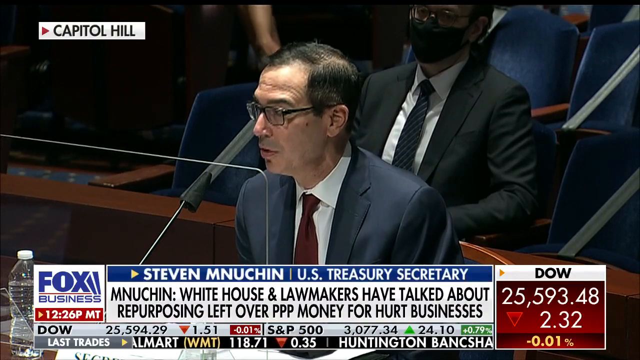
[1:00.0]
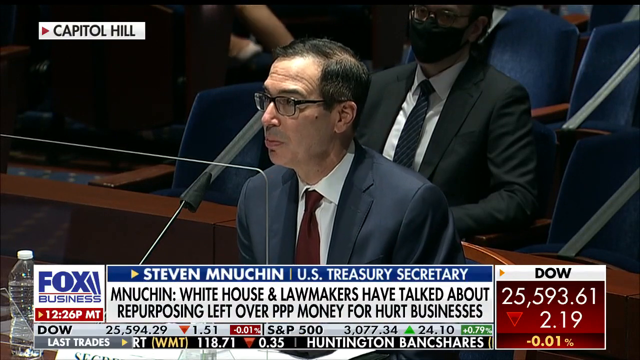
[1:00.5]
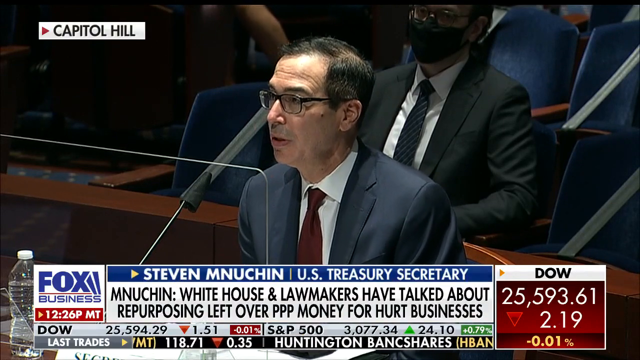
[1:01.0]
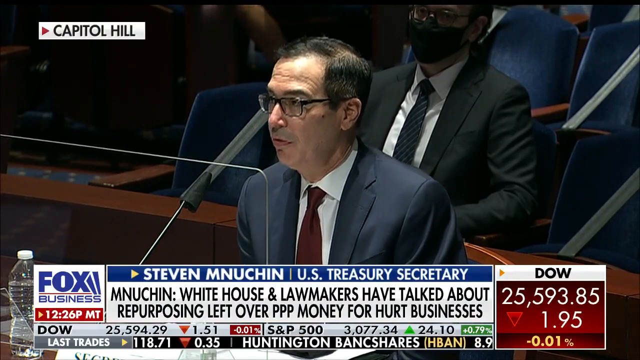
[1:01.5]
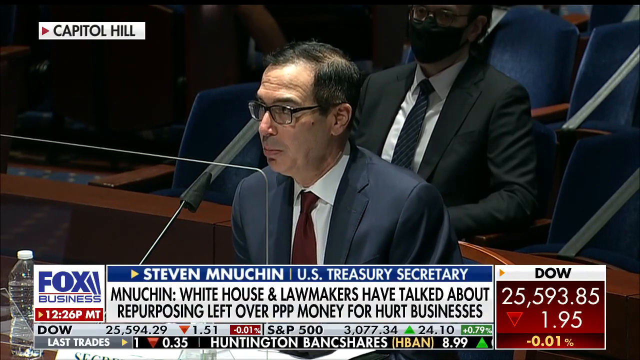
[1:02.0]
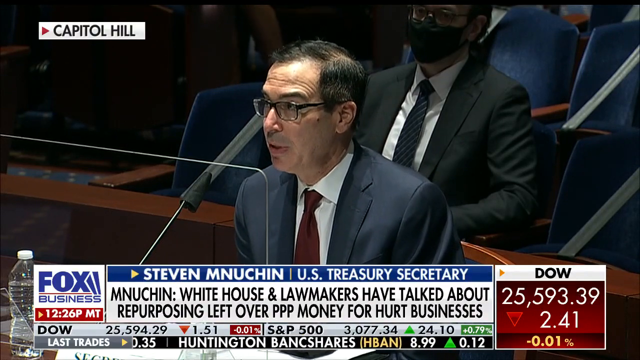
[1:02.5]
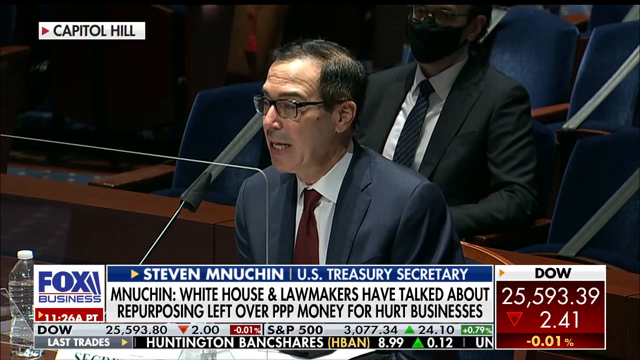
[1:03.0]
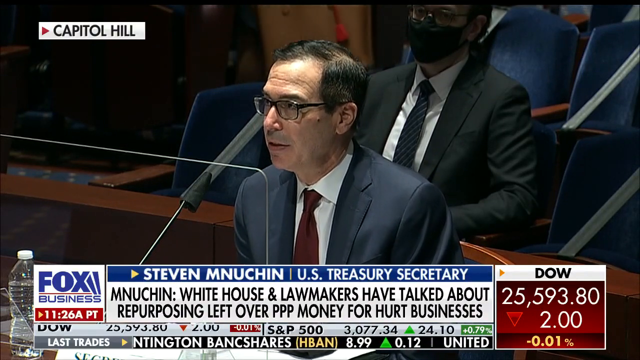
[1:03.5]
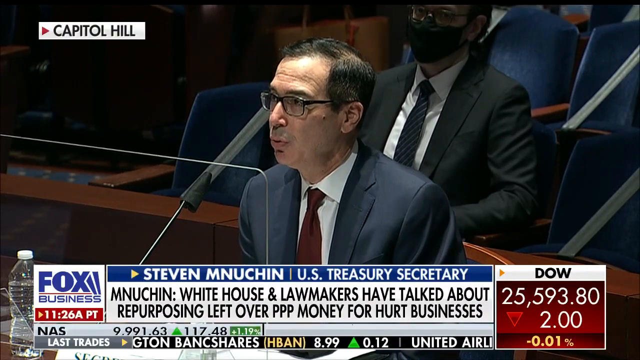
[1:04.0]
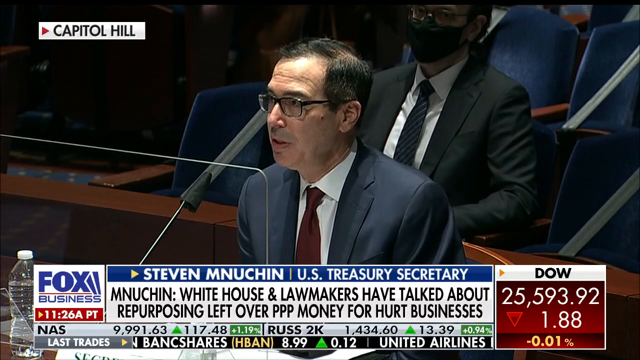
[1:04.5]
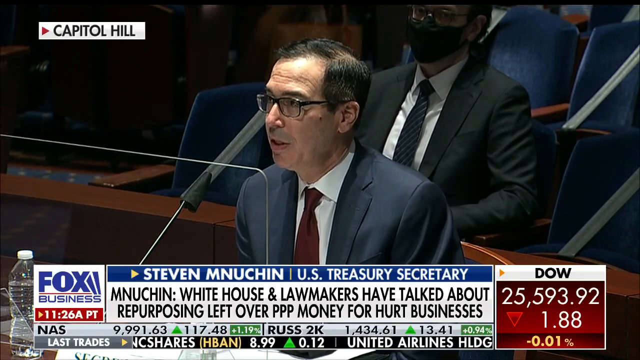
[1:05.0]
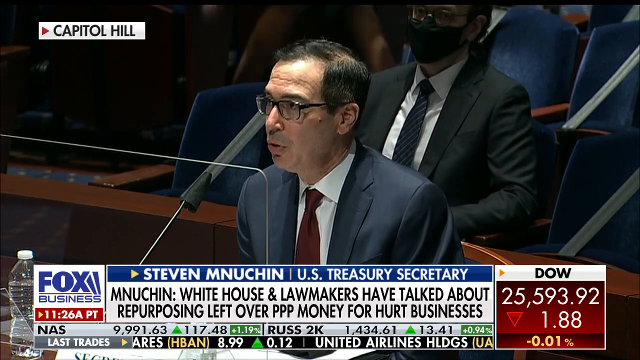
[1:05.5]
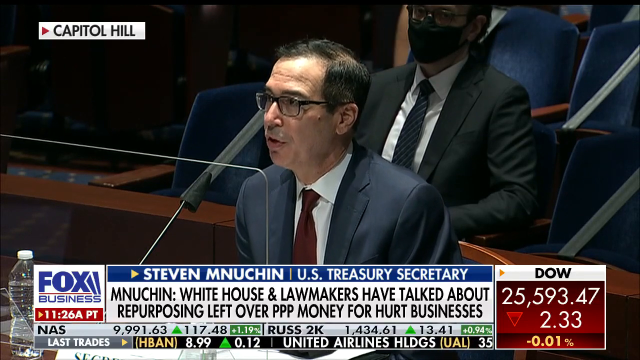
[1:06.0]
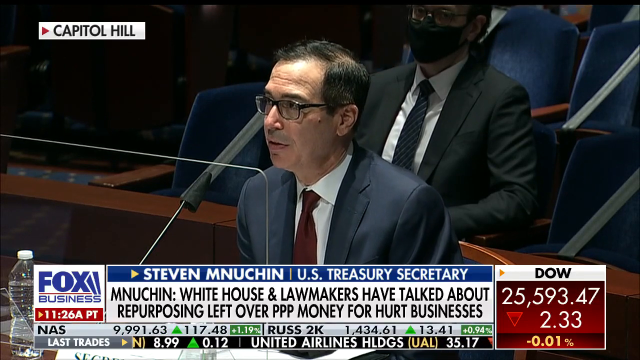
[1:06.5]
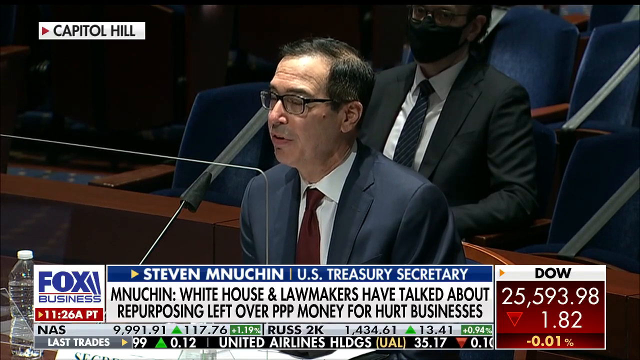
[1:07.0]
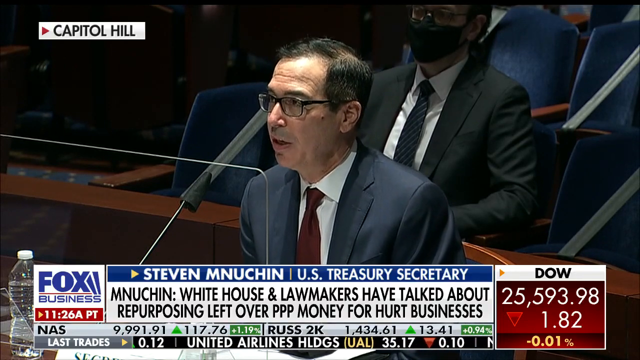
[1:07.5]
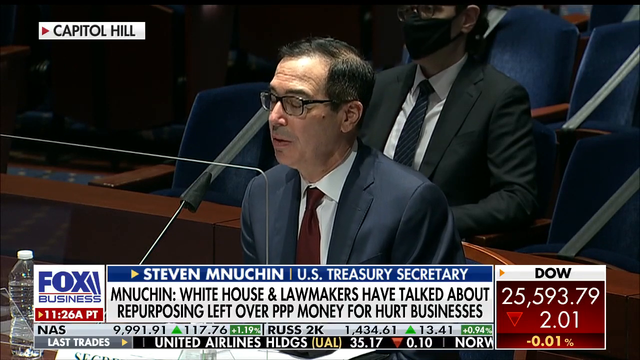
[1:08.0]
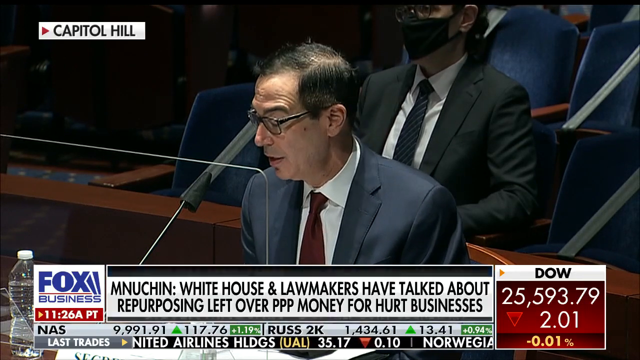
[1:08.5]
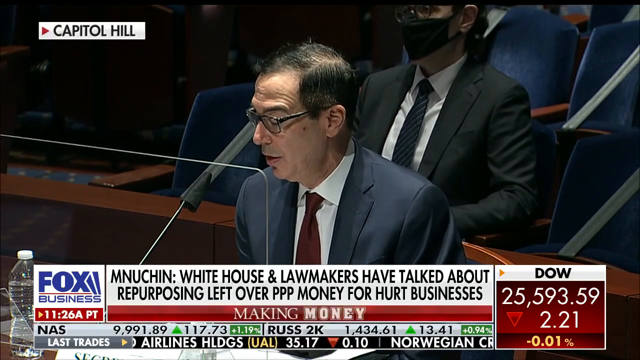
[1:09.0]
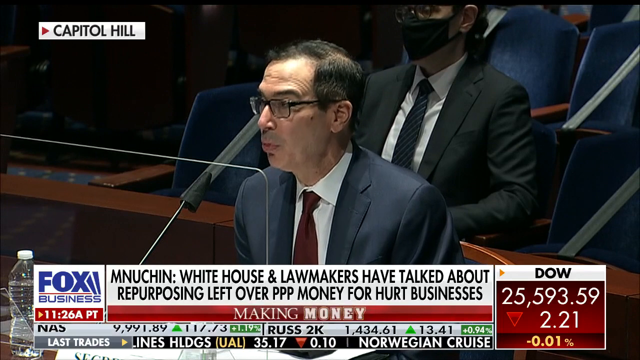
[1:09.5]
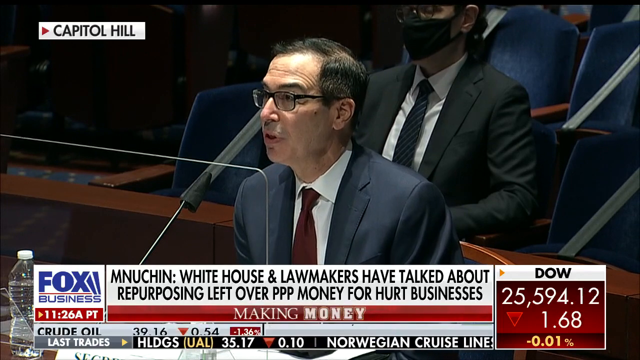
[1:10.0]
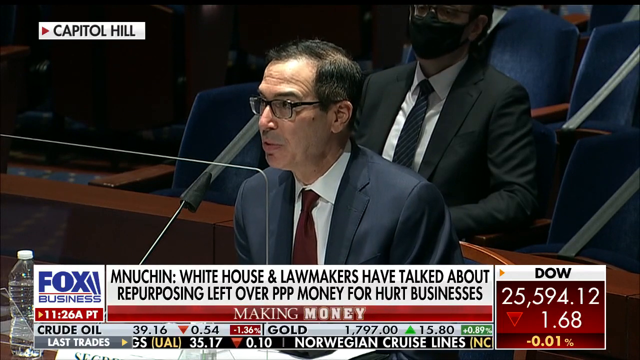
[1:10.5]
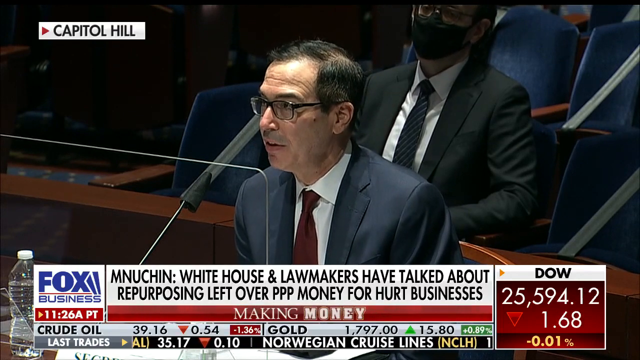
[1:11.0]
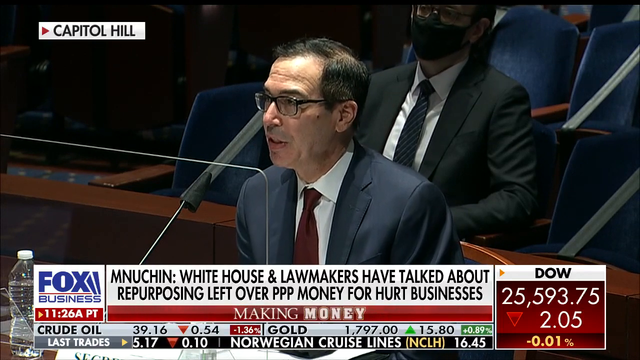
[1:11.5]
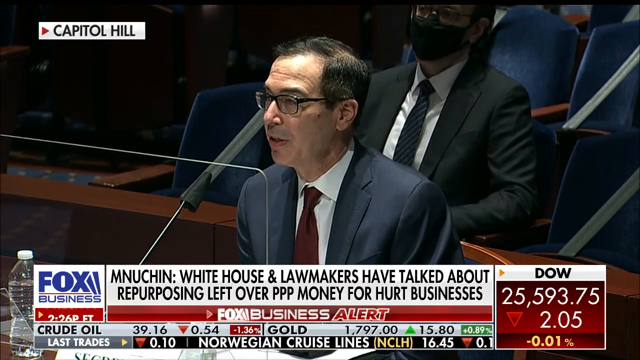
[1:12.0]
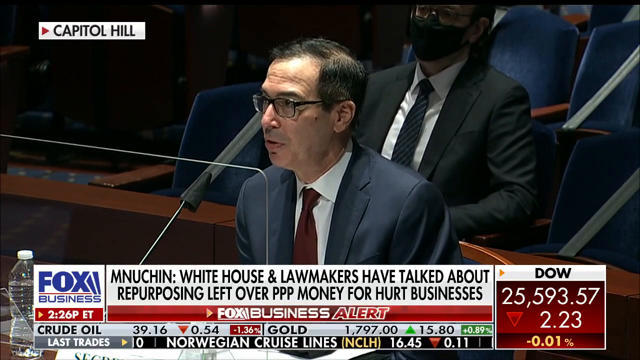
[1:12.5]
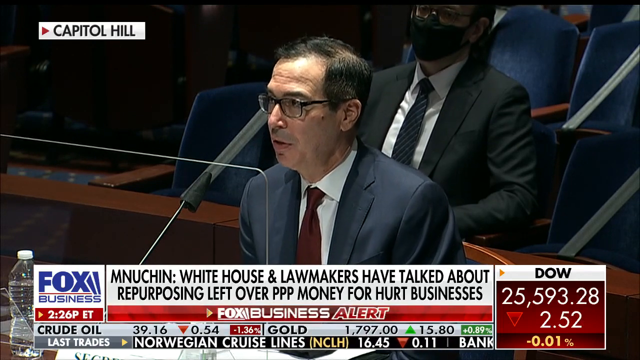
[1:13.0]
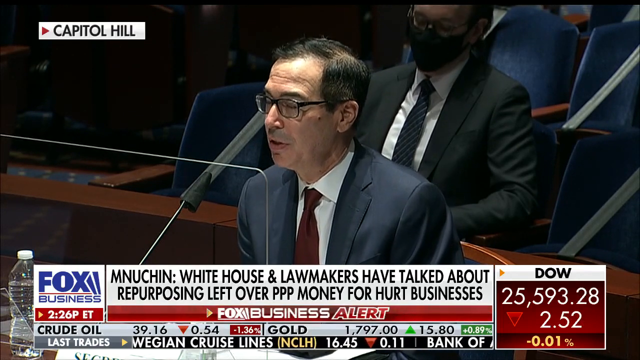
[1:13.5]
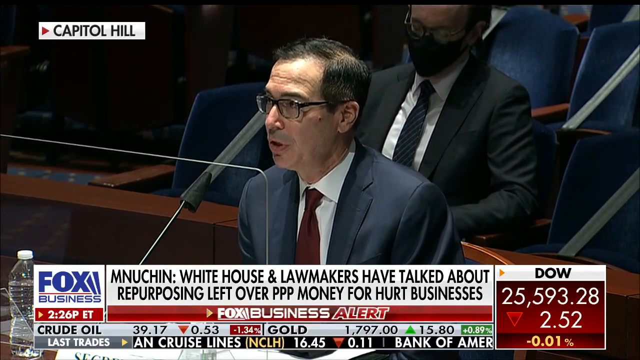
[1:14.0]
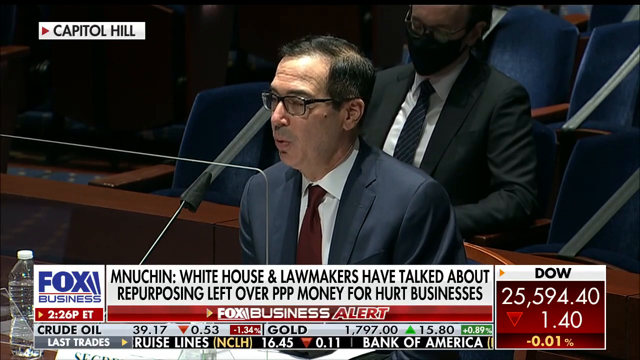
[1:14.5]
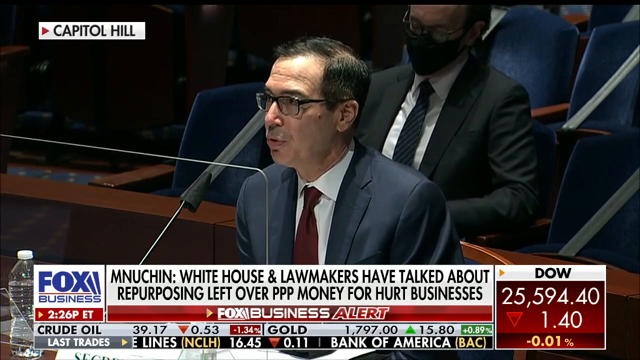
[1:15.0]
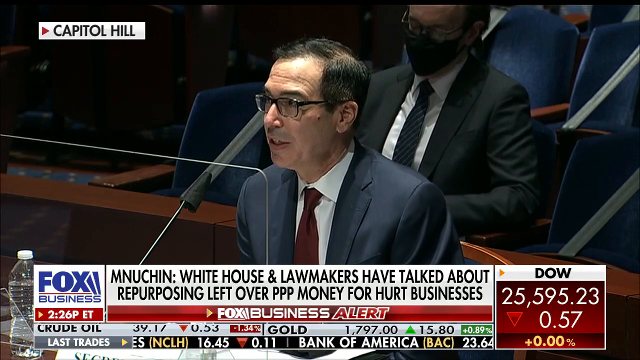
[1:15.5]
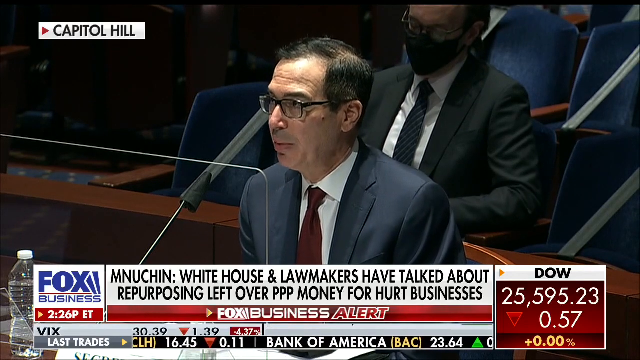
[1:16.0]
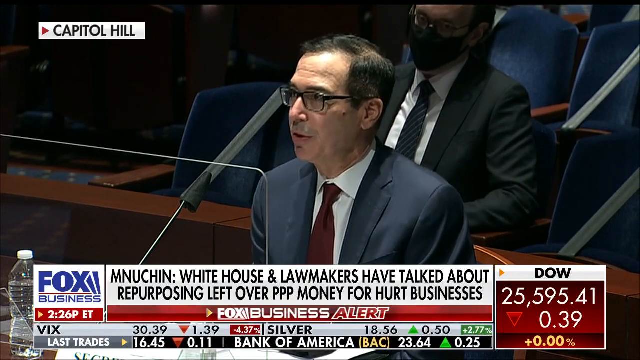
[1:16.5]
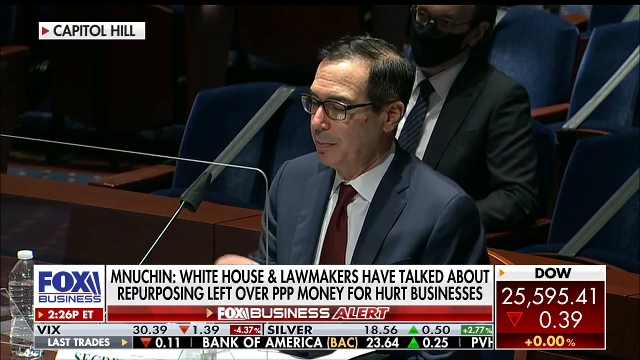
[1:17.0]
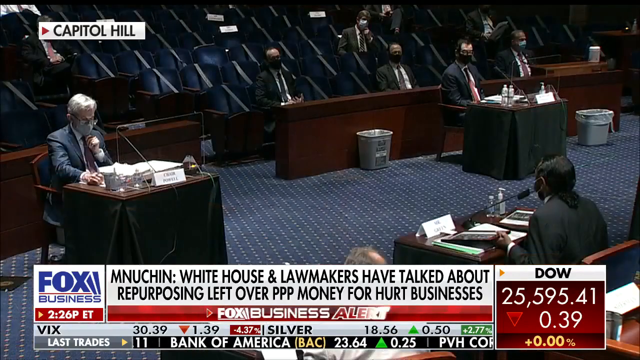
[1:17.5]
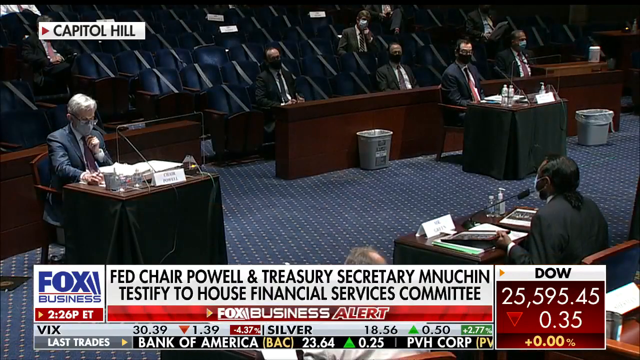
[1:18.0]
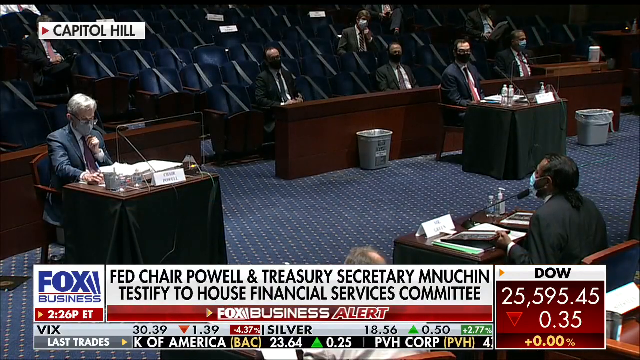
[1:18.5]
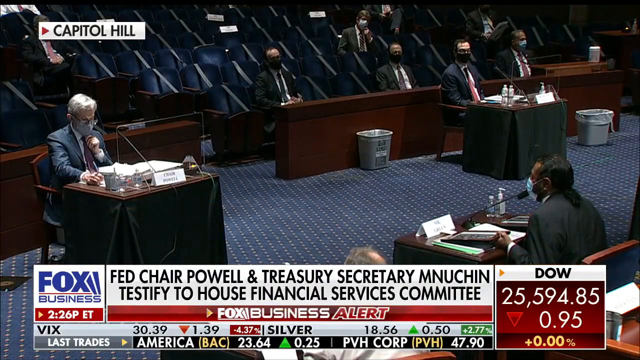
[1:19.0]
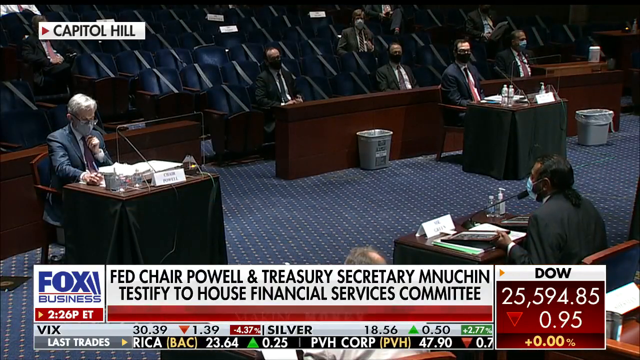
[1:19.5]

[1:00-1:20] The man continues talking in Congress under the headline "Mnuchin, White House and lawmakers have talked about repurposing leftover PPP money for hurt businesses", and another line reads "Fed Chair Powell and Treasury Secretary Mnuchin testified to House Financial Services Committee". Everyone in the meeting wears a mask and tidy, clean suits with ties and shirts. A label identifies the speaker as "Steve Mnuchin, U.S. Treasury Secretary"; he seems very confident. The camera pans over to the opposing side, who appear to be acknowledging what he is saying. The room is clean and tidy.